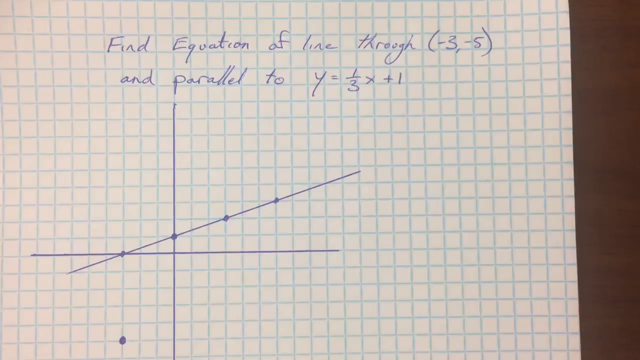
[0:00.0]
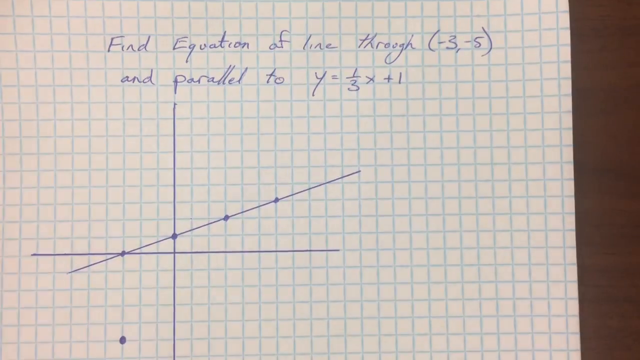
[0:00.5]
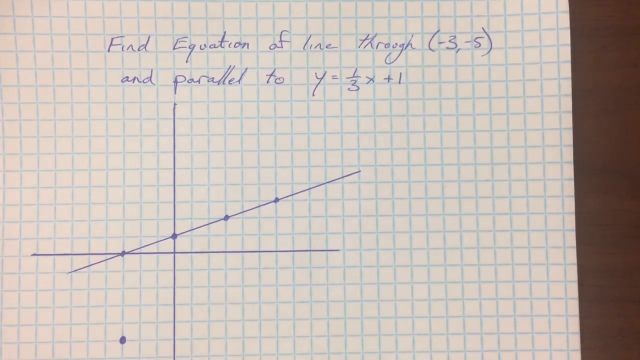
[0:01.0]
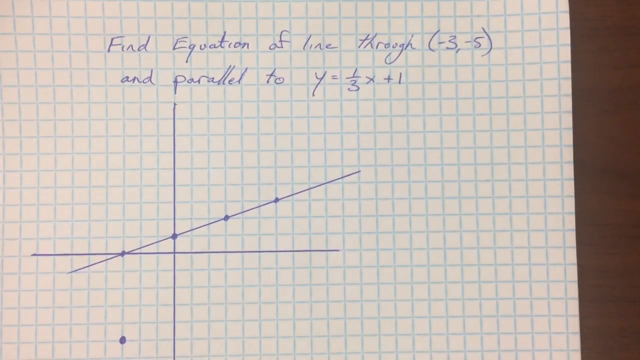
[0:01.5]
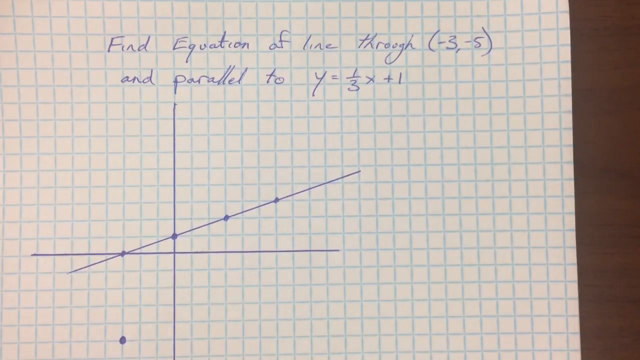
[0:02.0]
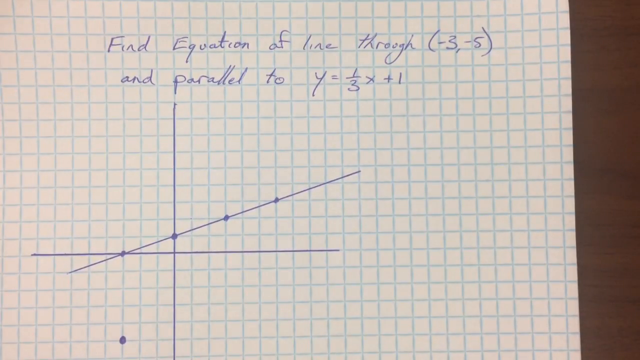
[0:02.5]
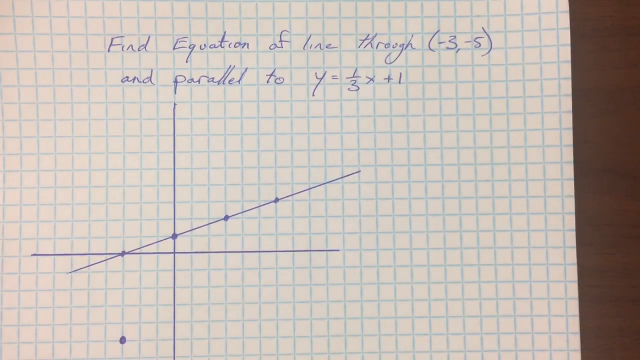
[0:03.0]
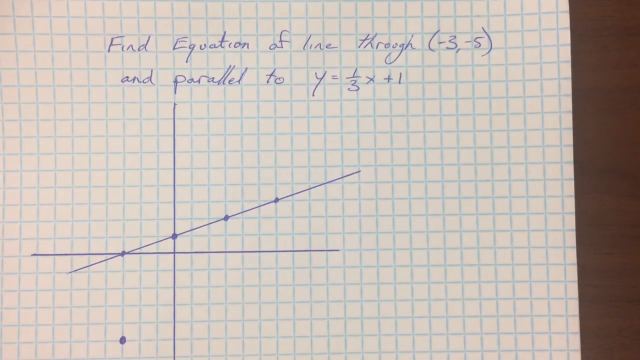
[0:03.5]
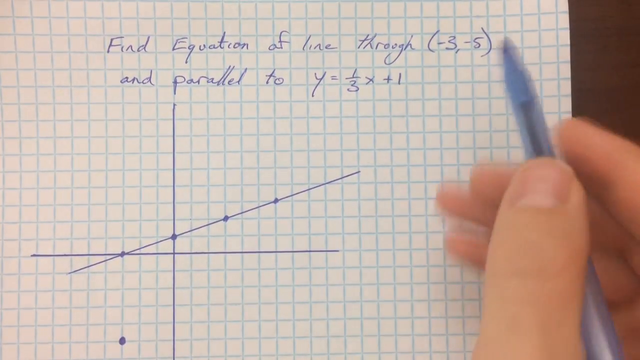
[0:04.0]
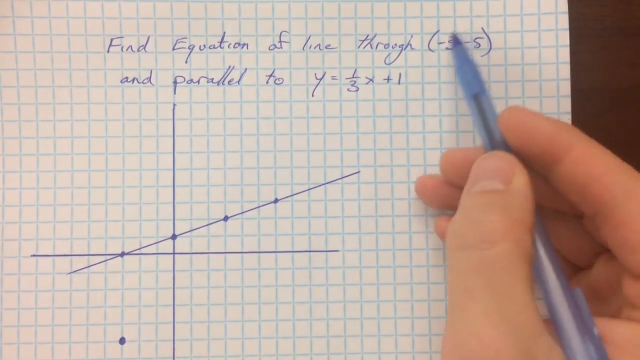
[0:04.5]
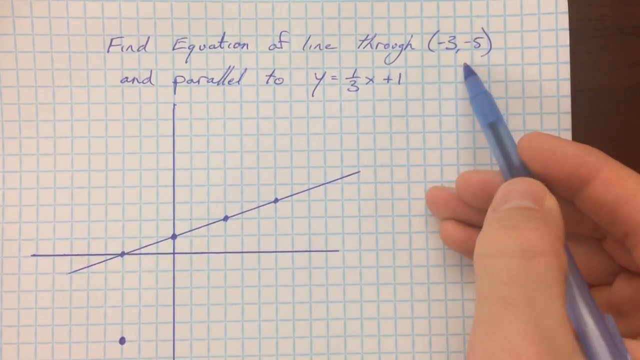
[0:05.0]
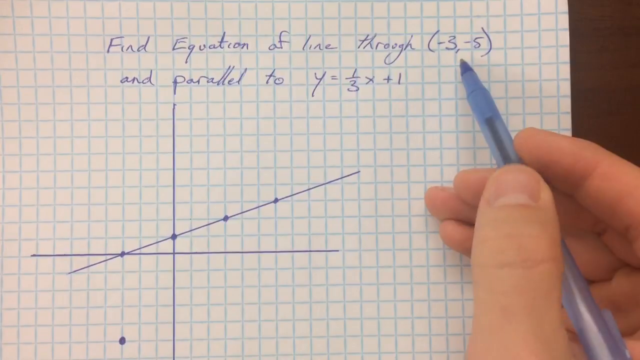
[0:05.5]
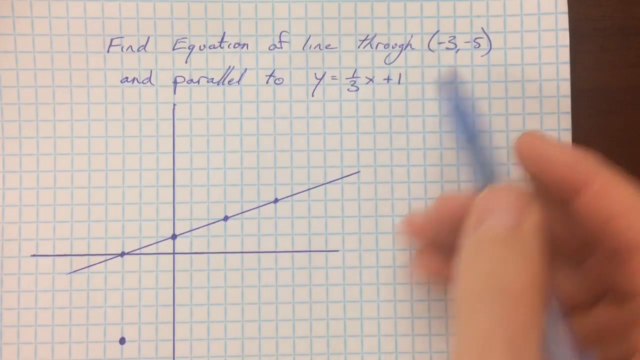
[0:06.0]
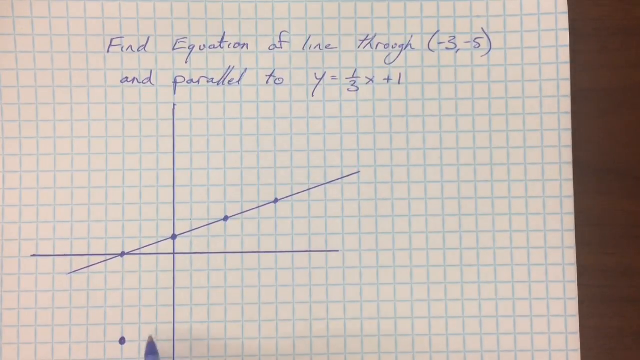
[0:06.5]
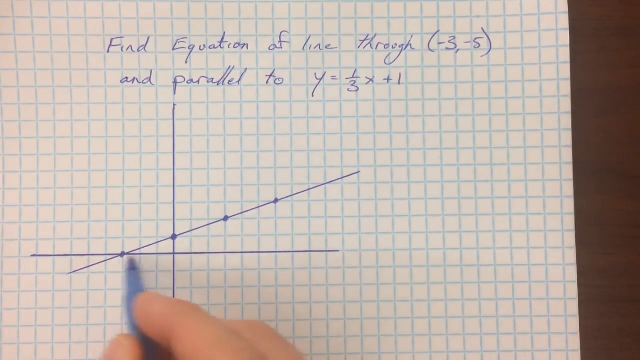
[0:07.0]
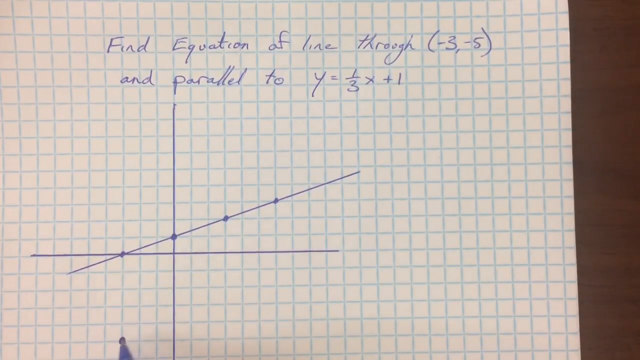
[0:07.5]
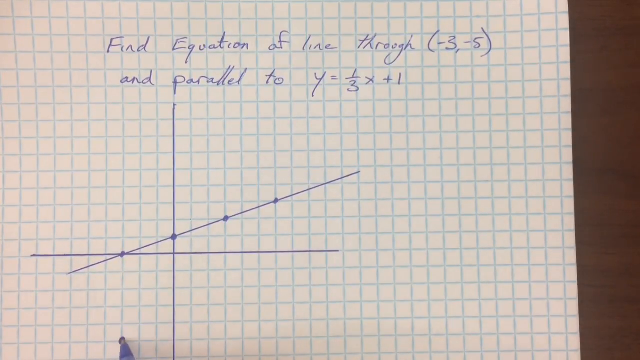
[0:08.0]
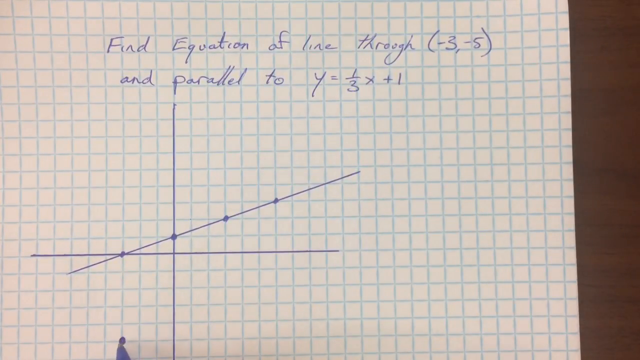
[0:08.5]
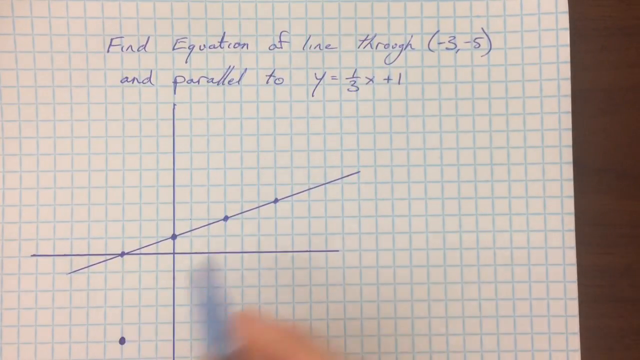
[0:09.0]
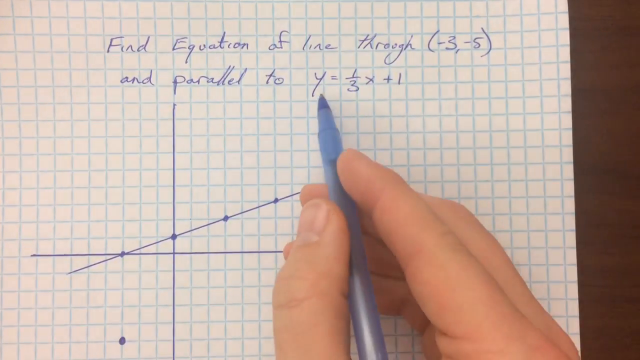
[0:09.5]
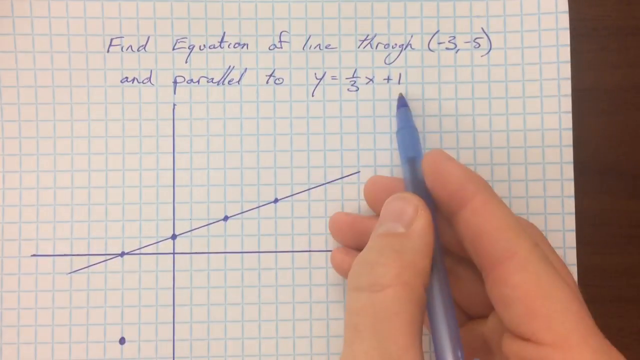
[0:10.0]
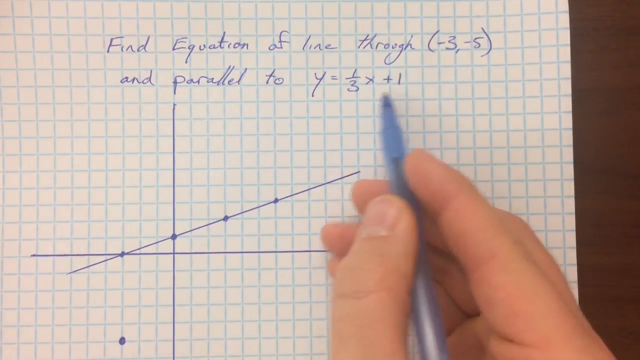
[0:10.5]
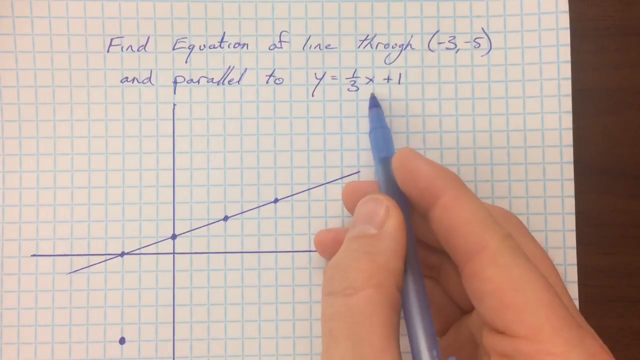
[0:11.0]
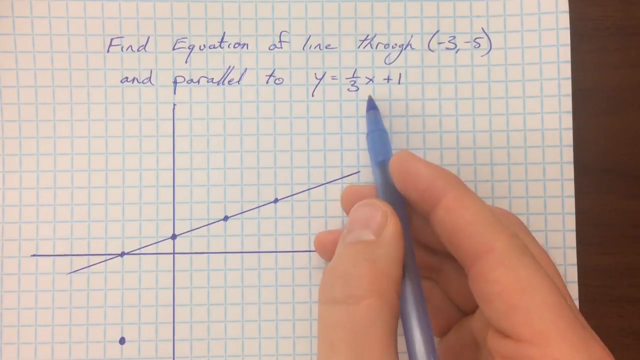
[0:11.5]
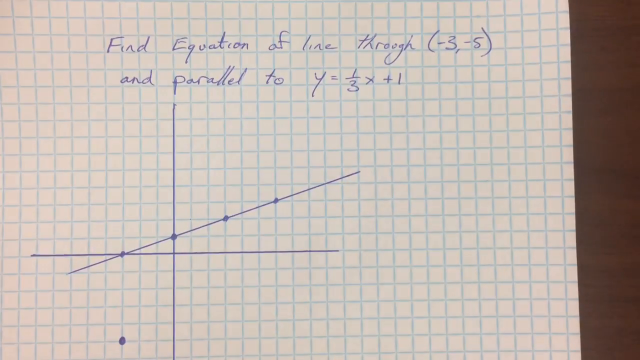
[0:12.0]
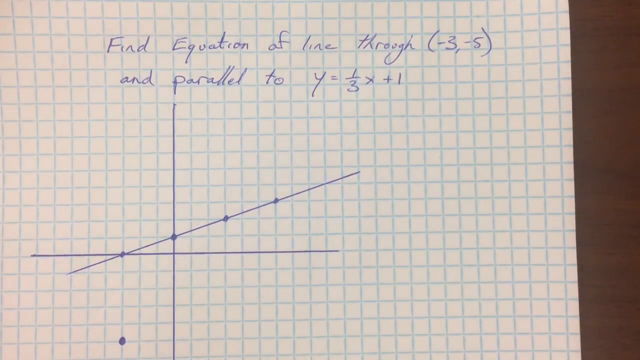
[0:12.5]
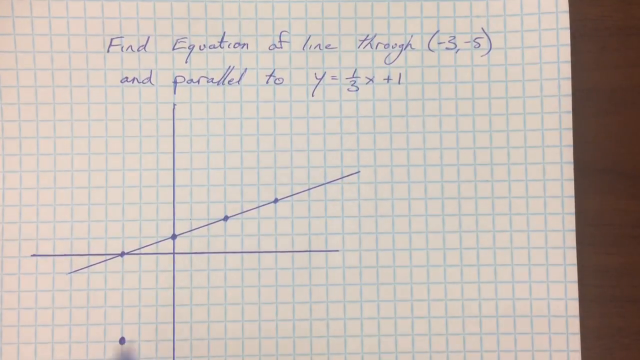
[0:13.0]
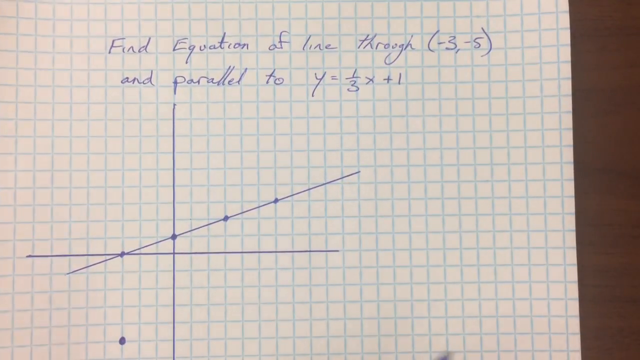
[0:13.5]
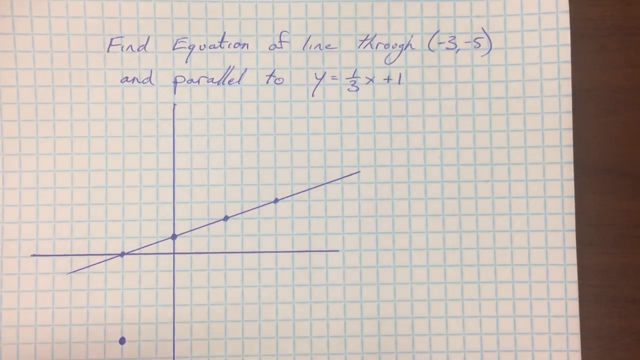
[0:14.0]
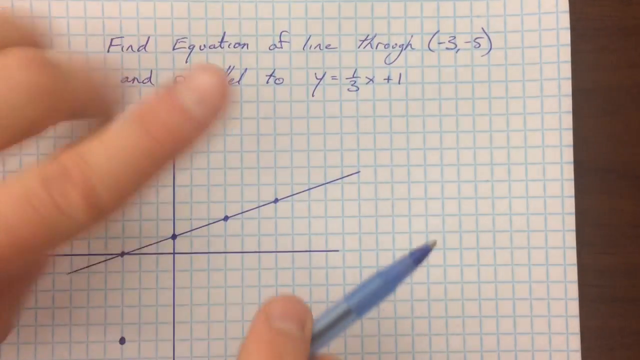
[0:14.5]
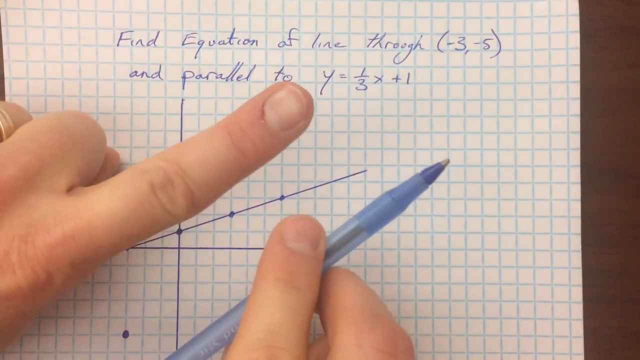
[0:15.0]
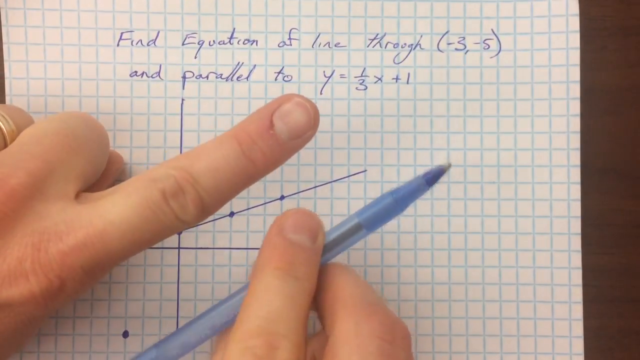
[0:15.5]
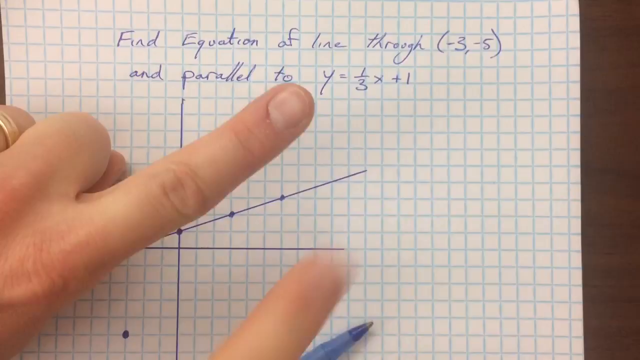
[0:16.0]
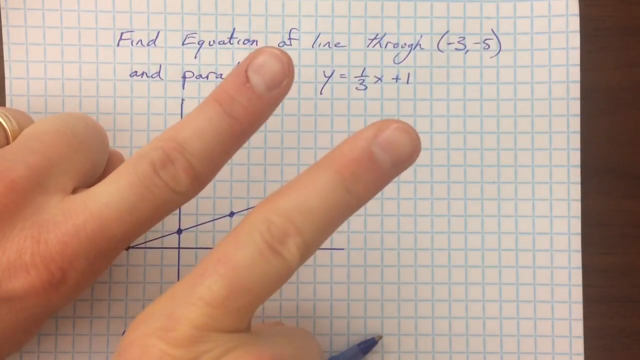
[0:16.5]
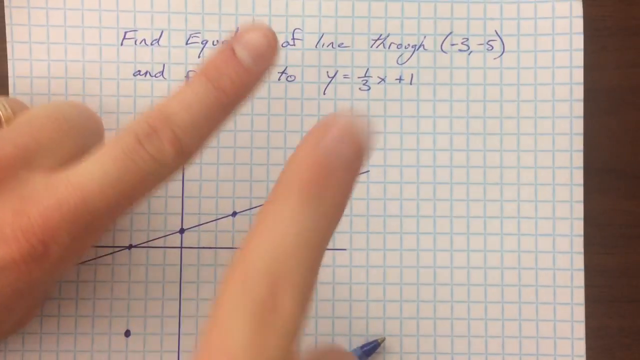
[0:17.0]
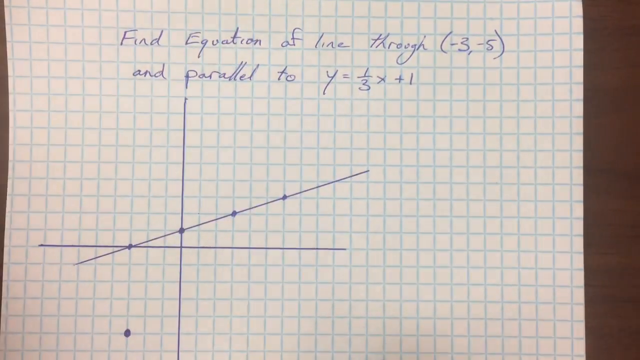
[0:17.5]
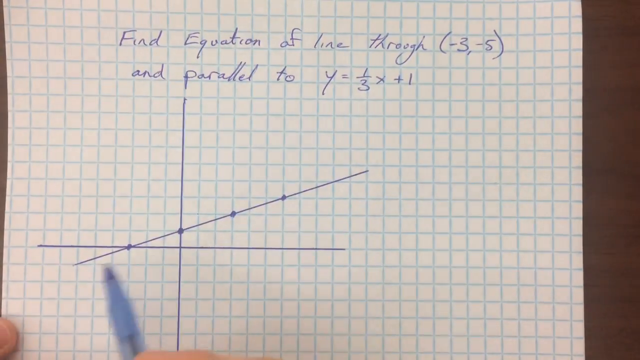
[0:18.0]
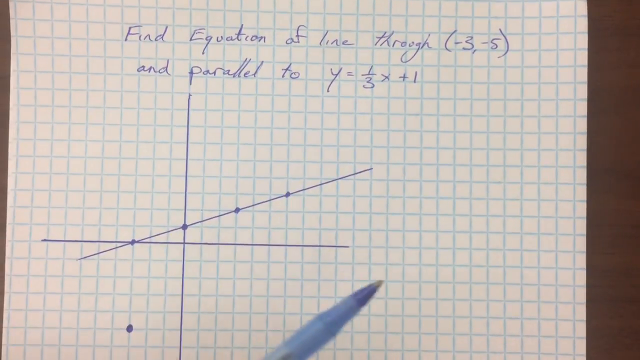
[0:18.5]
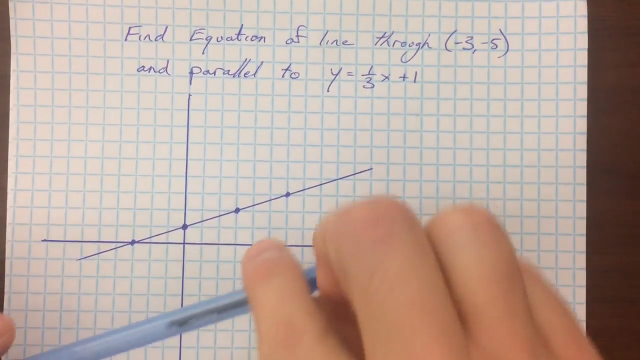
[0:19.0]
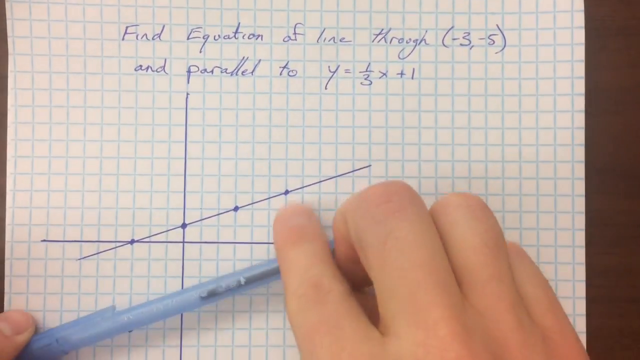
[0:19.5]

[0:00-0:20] A notebook shows a mathematical problem that reads "find the equation of line through -3, -5 and parallel to y = 1/3x + 1". The line y = 1/3x + 1 is represented by a graph on the bottom left side of the notebook. A hand holding a pencil appears and points at several parts of the problem, indicating that the given equation is the one drawn at the bottom left. The hand then uses its fingers to sort of show that the task is to find the line through -3 and -5 that is parallel to the line already drawn. The problem seems about to be explained.